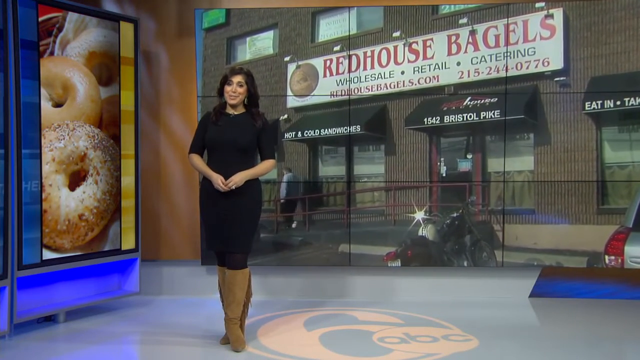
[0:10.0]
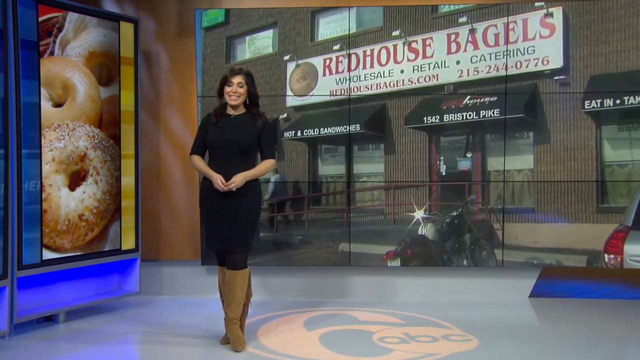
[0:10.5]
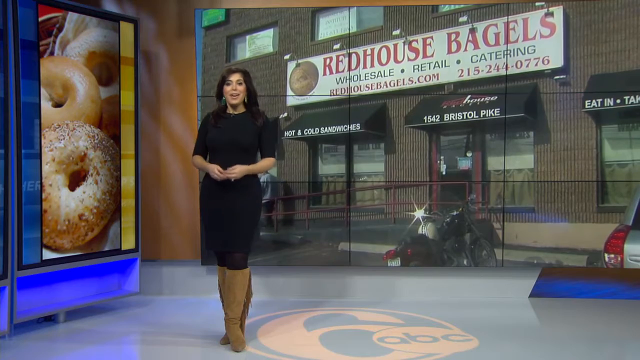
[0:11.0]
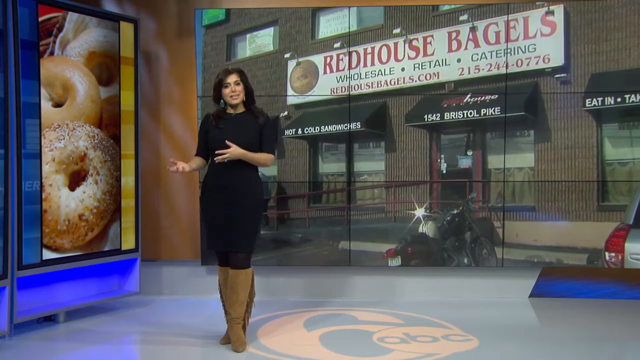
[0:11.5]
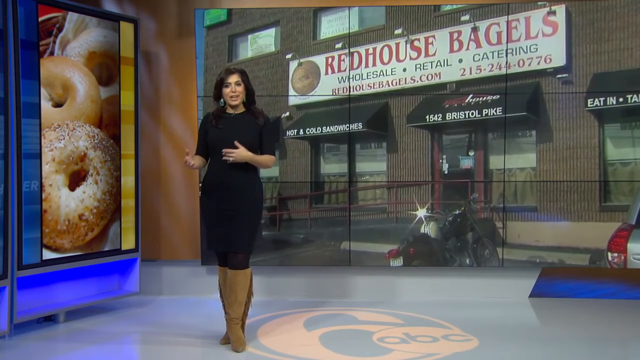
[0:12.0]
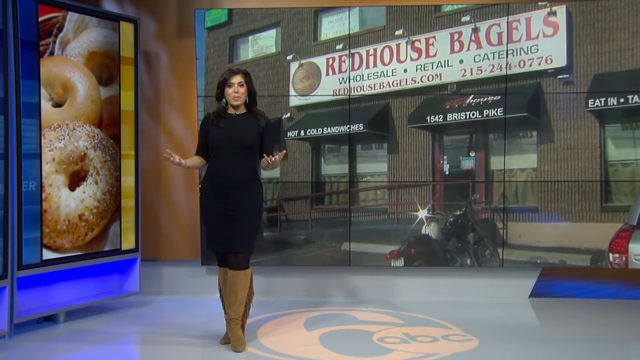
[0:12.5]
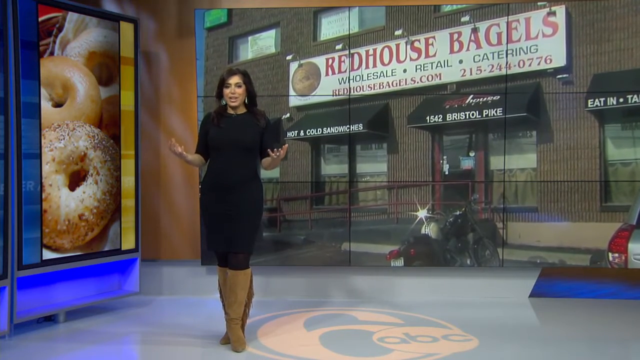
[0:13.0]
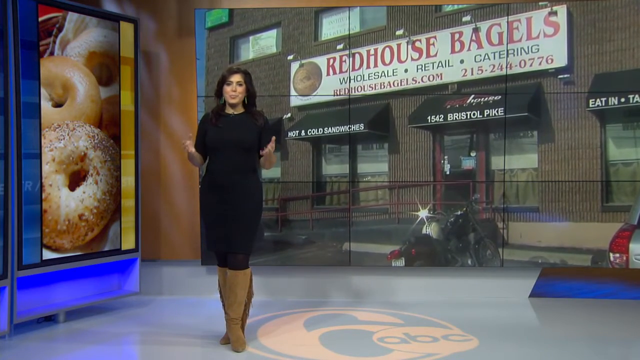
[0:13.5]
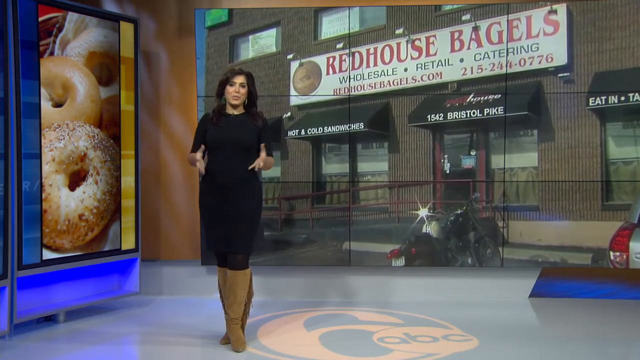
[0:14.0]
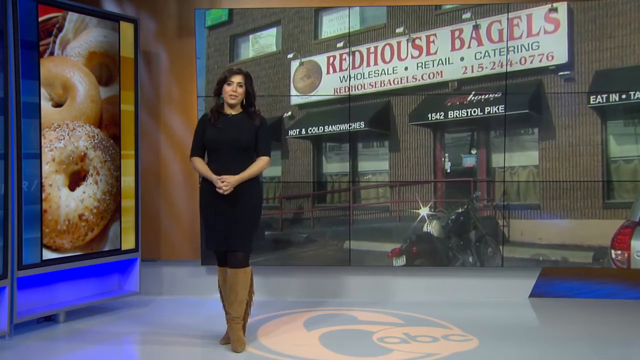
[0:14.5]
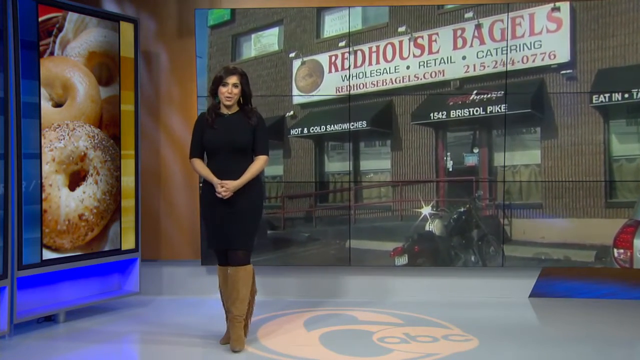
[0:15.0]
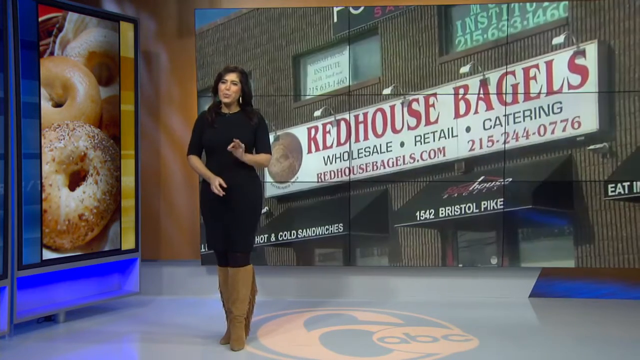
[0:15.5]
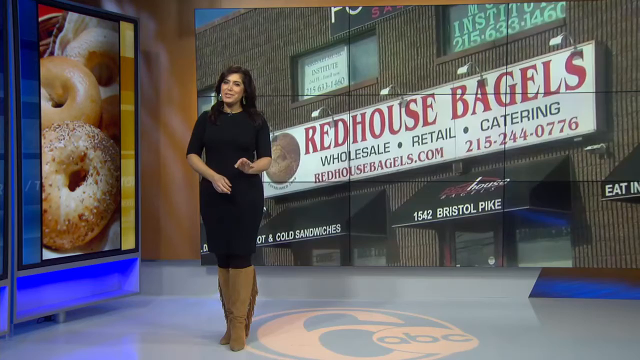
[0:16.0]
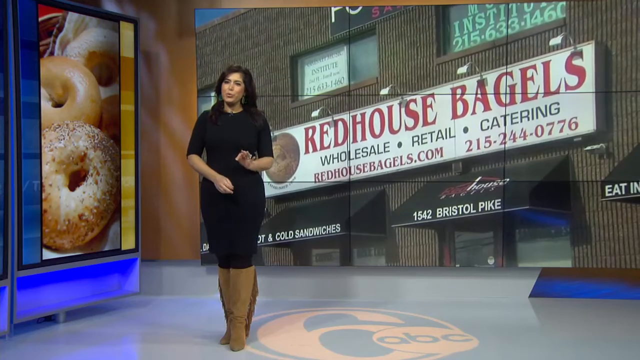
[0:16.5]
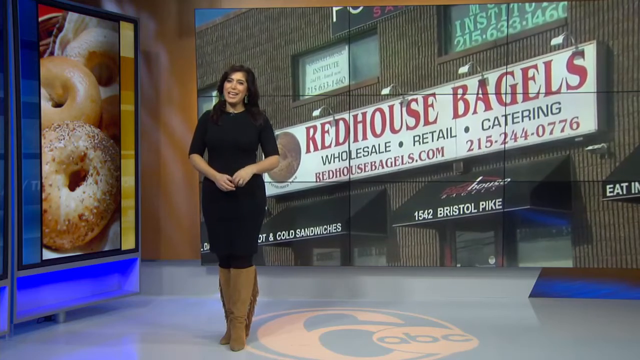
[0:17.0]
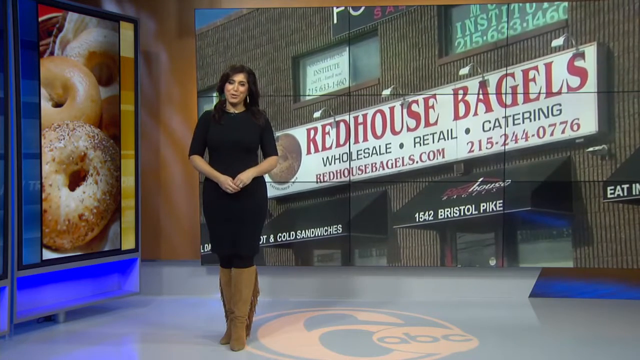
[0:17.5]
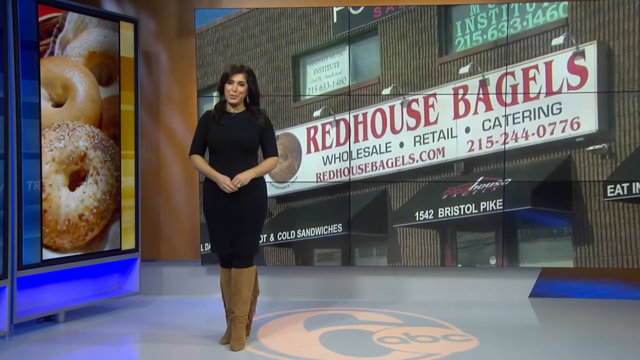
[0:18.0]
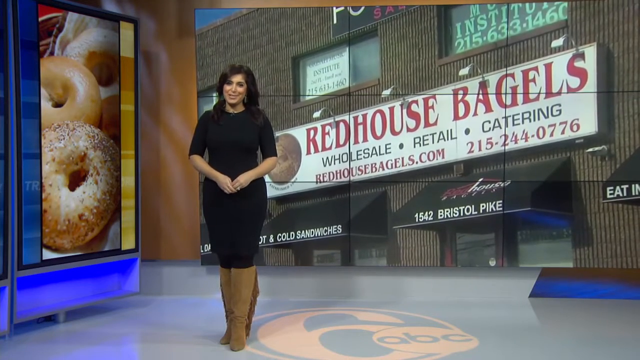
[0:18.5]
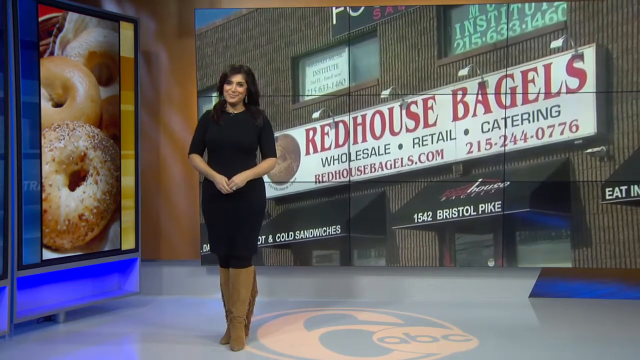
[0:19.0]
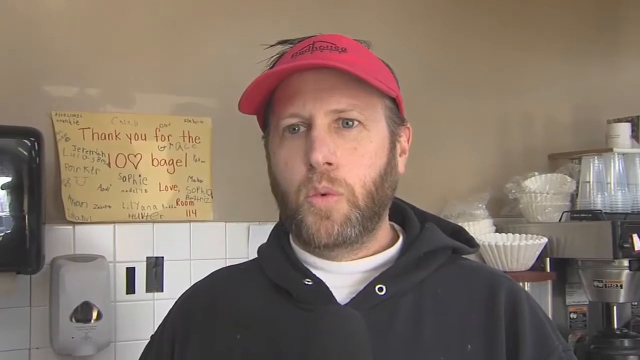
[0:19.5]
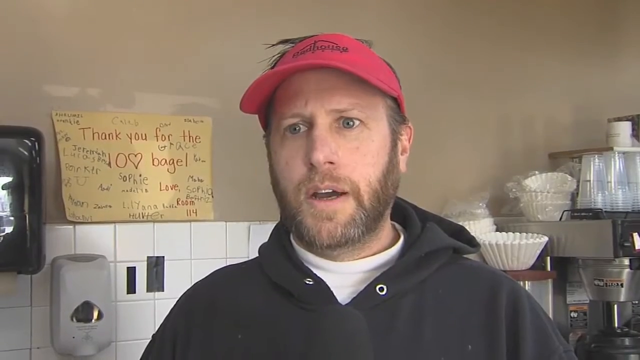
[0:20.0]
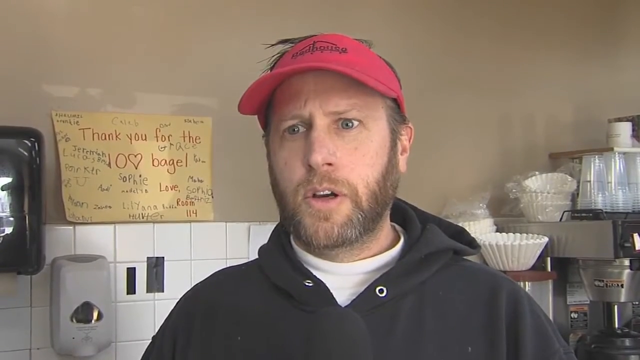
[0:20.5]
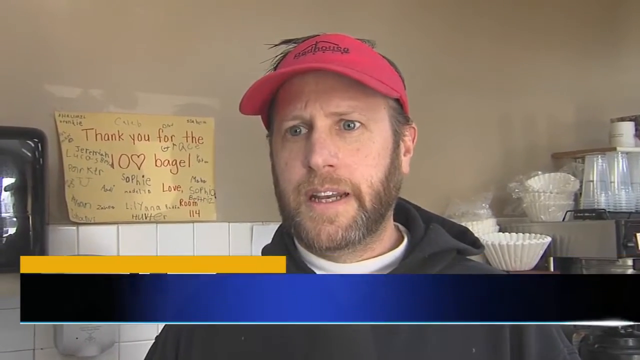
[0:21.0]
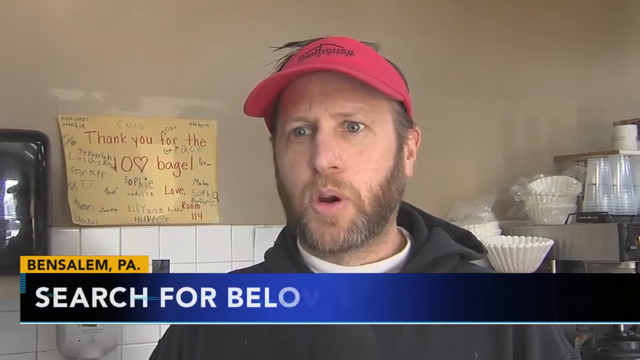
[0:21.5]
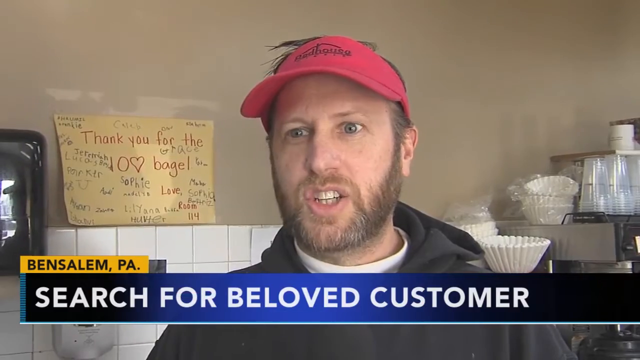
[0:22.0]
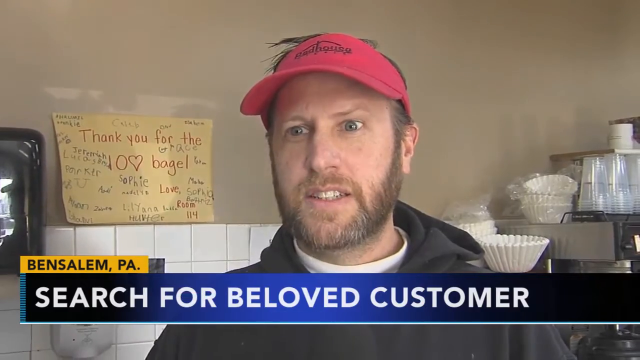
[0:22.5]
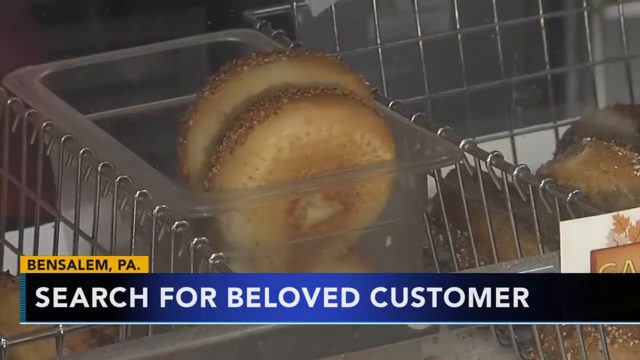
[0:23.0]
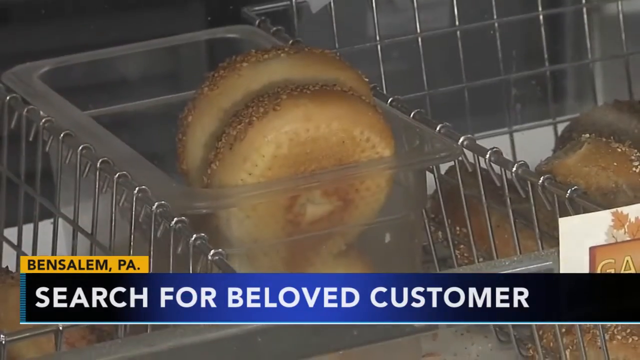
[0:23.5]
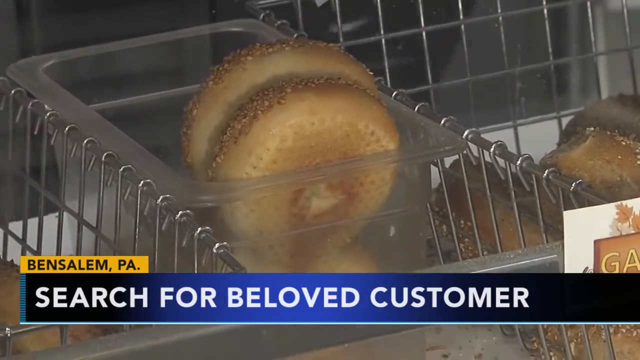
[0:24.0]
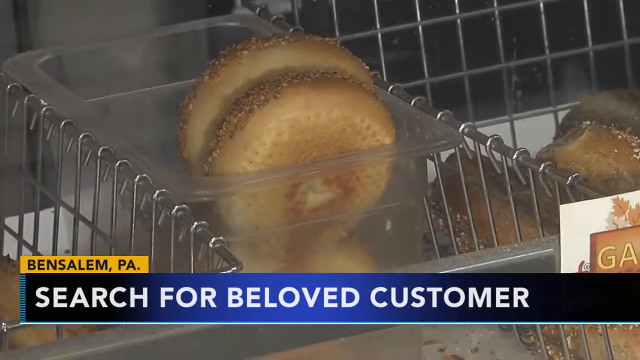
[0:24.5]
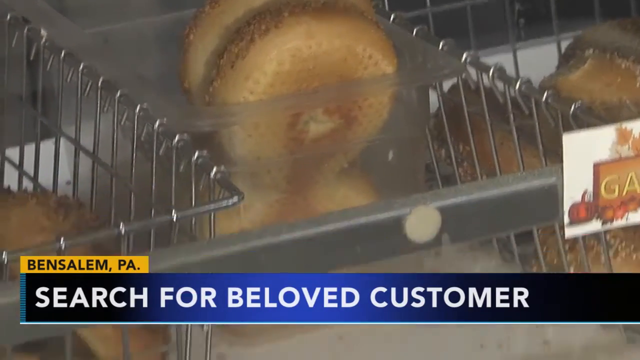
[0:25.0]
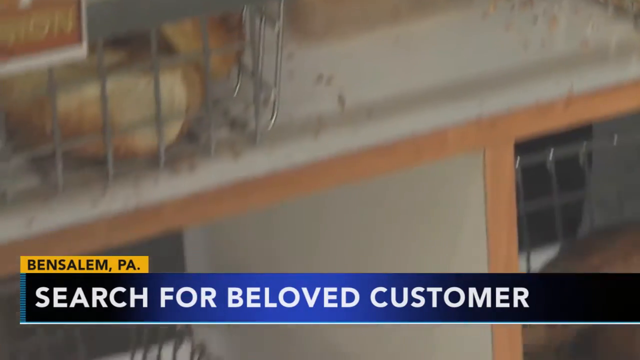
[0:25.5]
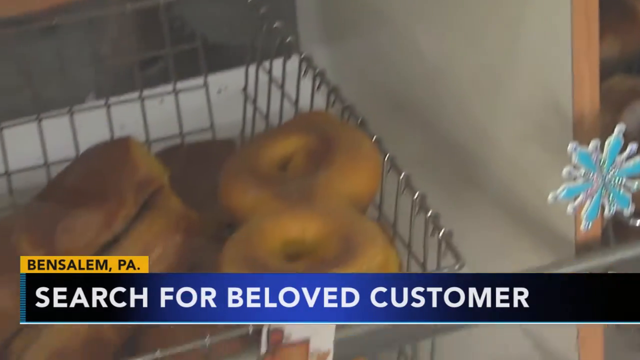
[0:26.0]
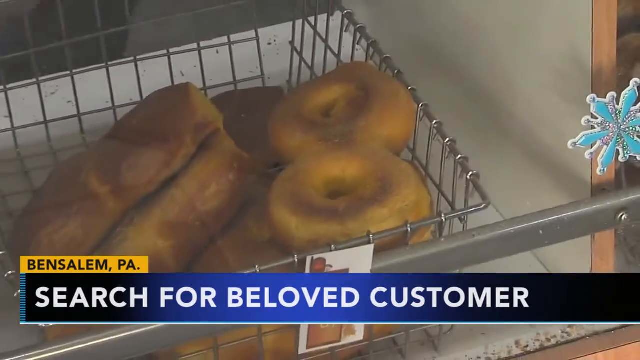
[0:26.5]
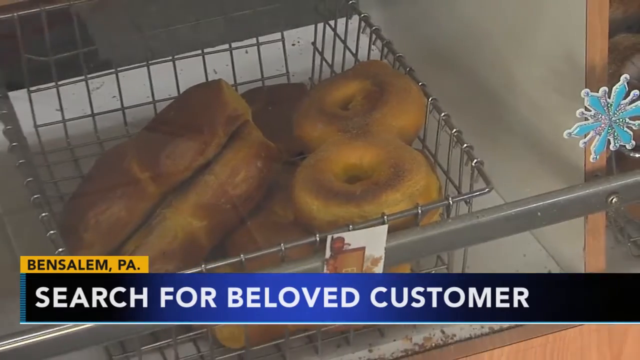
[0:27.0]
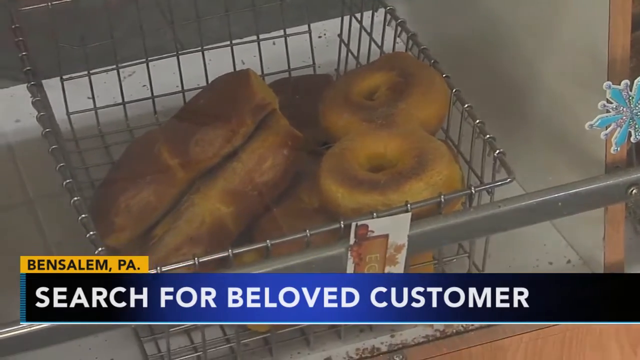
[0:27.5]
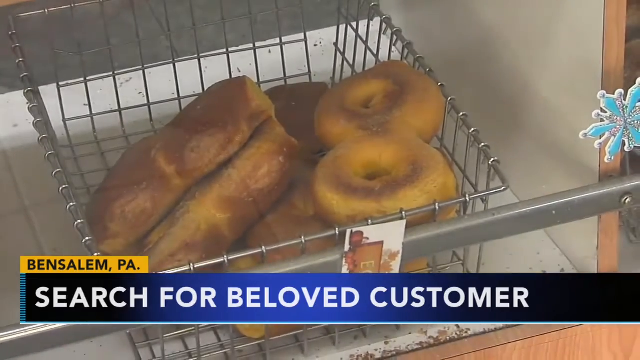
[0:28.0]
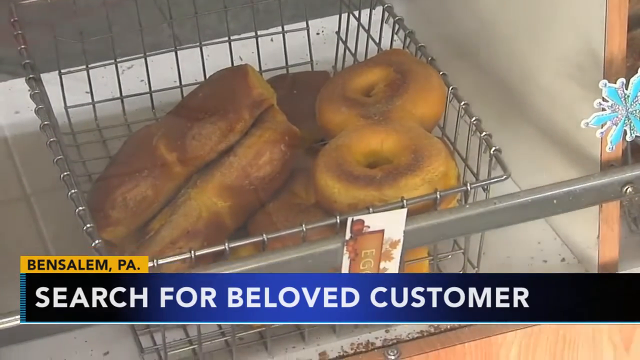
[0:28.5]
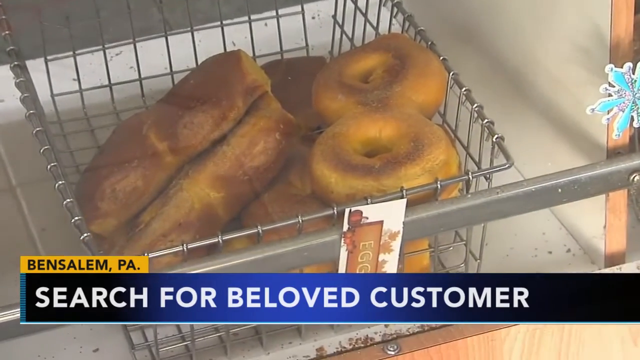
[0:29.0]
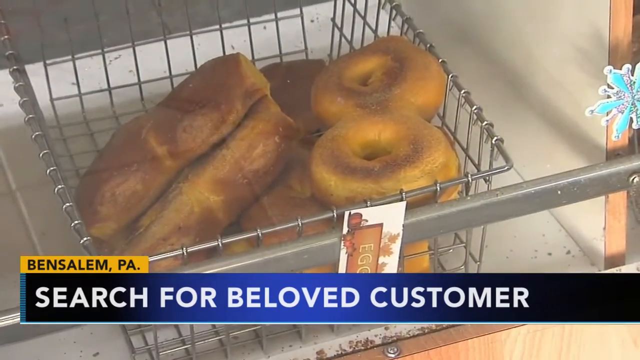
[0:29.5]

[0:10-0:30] A female newscaster is standing up with her hands joined together, wearing a black dress and earrings. Behind her, a video shows a business called Red House Bagels, and on the left side of the screen there is a big picture of bagels. She gestures with her hands, joining and separating them. Next, a white man with a red hat and a beard is speaking, with the caption "Search for beloved customer" at the bottom. The camera then focuses on some bagels, apparently inside the business. The bagels have different shapes and a yellowish and brown color, and they are in a metal basket; there seem to be about 7 of them. After a few seconds on these bagels, lots of bagels appear behind a glass window.